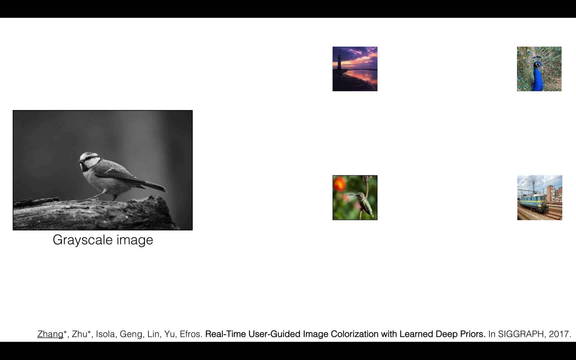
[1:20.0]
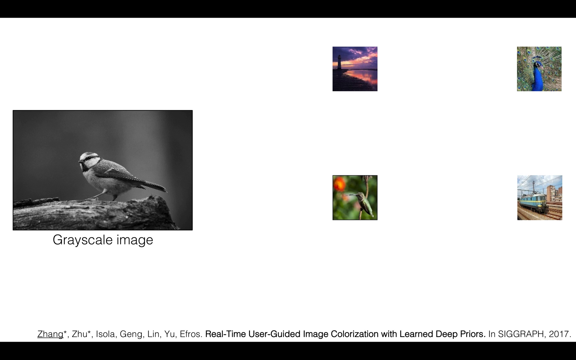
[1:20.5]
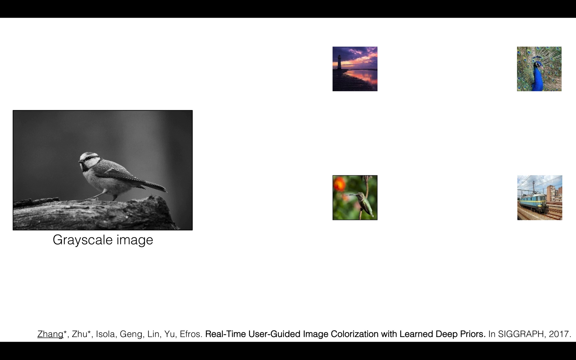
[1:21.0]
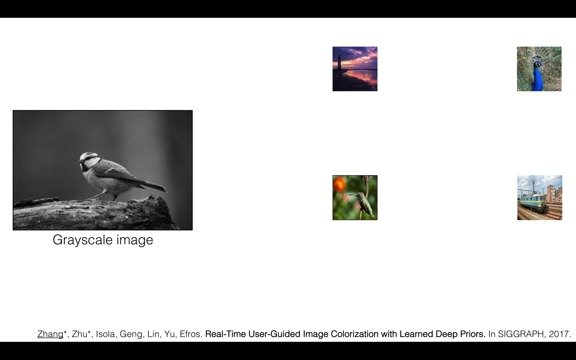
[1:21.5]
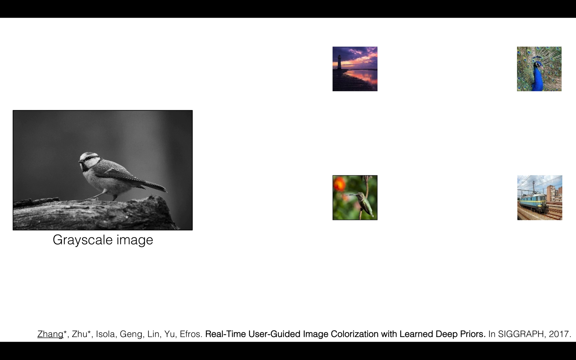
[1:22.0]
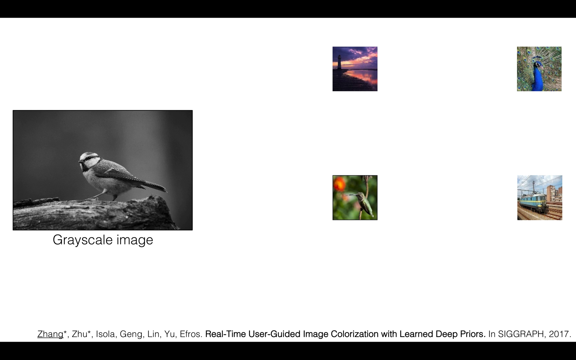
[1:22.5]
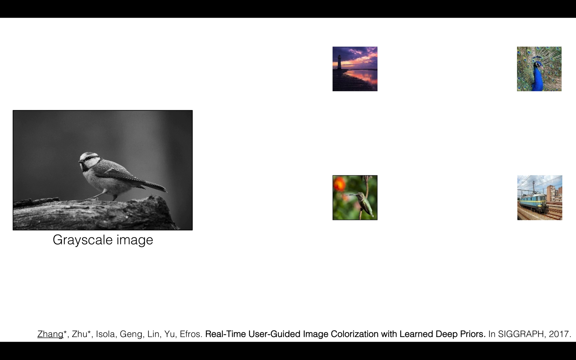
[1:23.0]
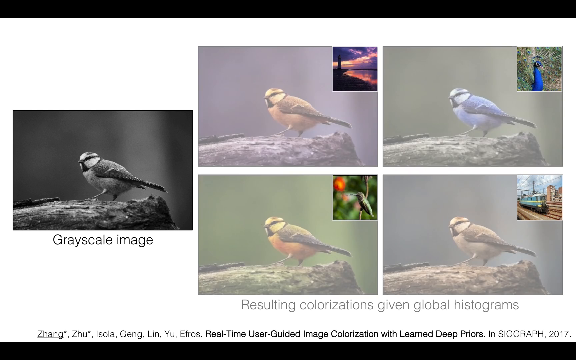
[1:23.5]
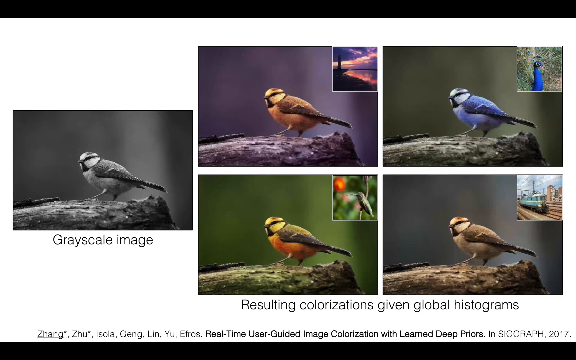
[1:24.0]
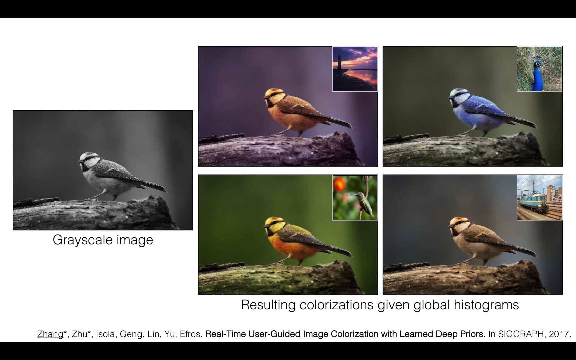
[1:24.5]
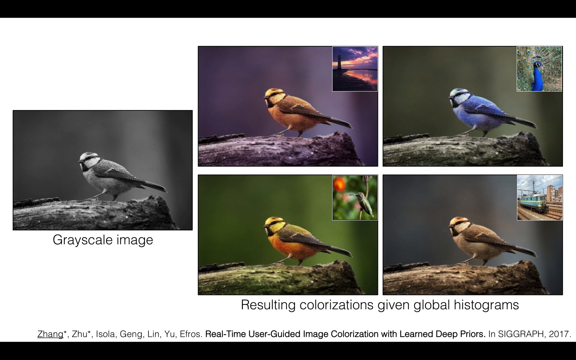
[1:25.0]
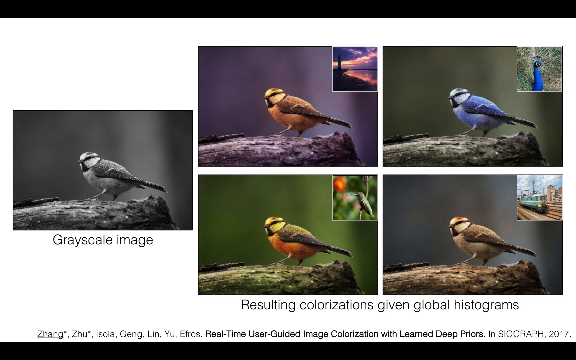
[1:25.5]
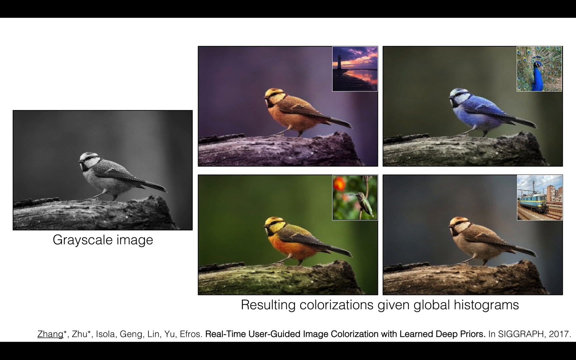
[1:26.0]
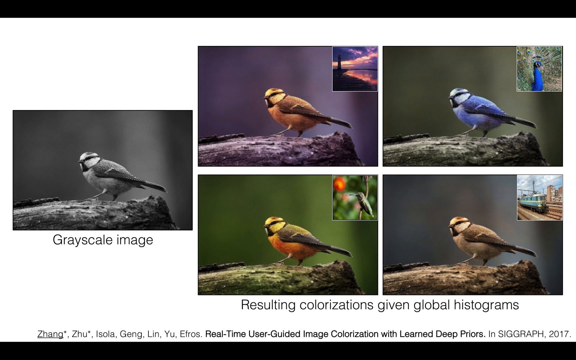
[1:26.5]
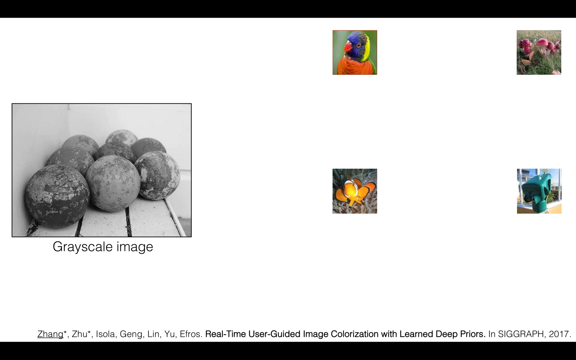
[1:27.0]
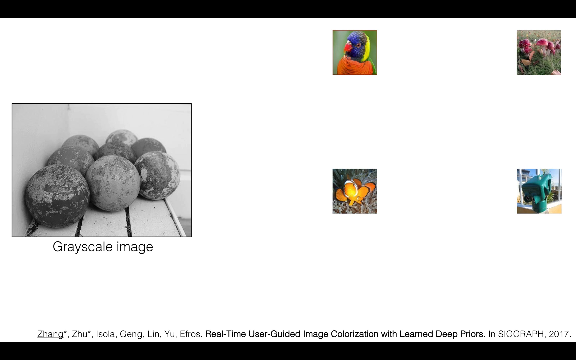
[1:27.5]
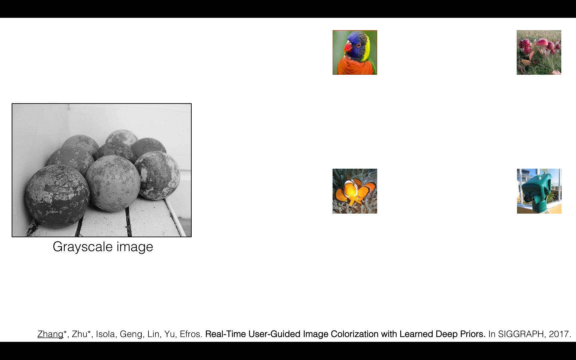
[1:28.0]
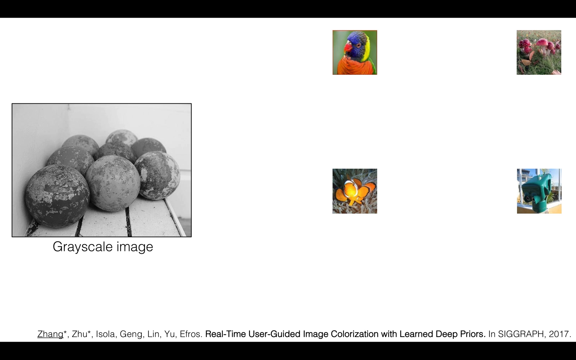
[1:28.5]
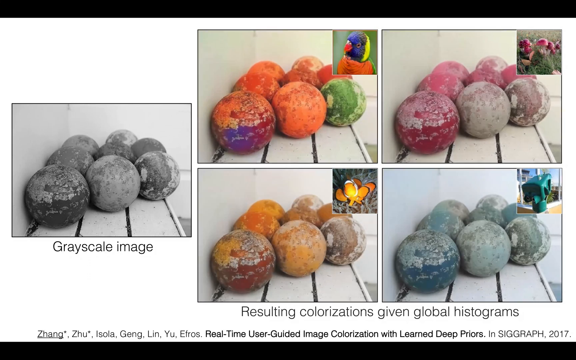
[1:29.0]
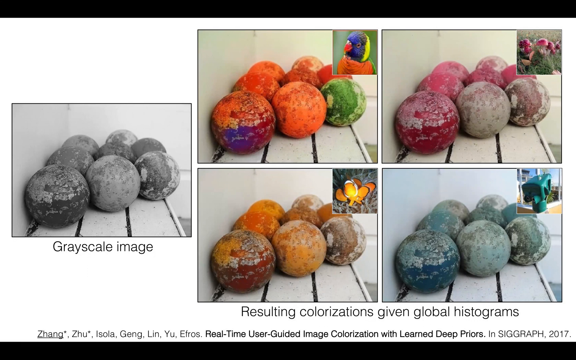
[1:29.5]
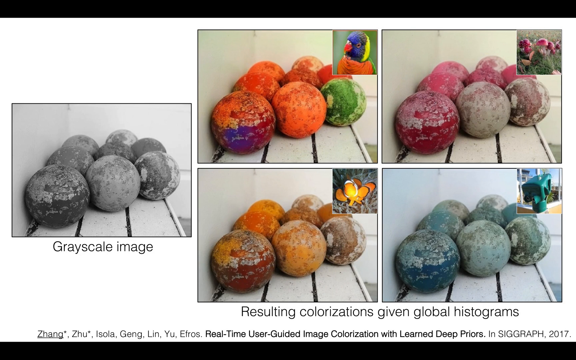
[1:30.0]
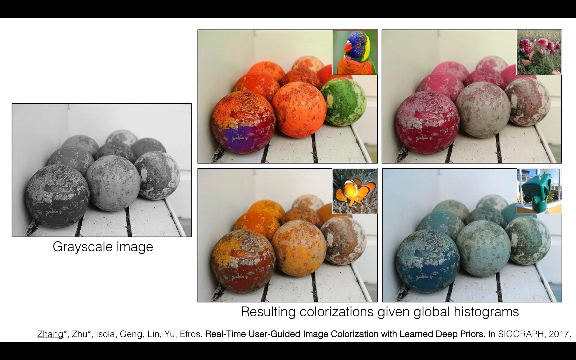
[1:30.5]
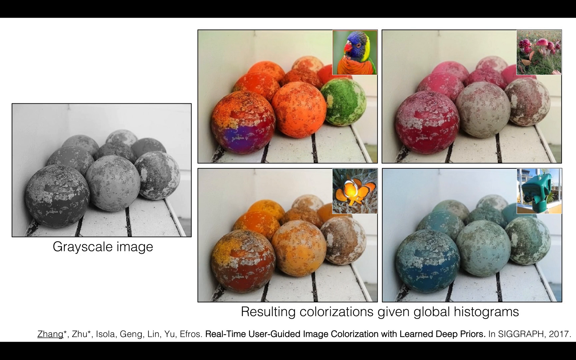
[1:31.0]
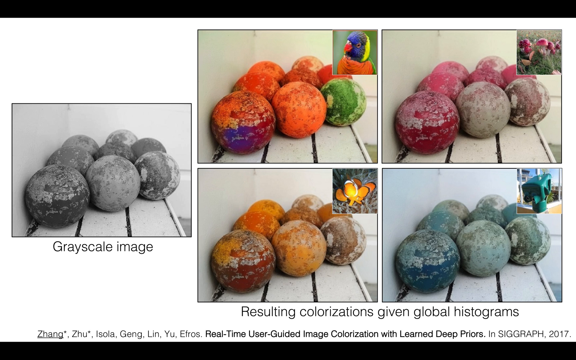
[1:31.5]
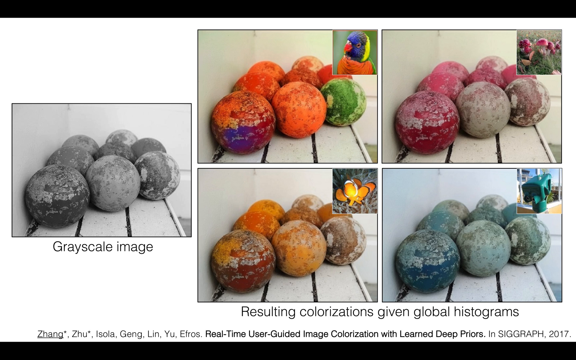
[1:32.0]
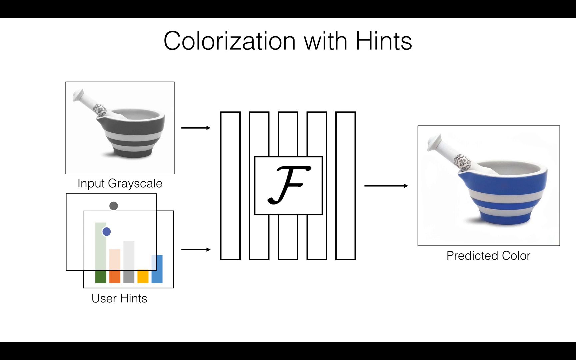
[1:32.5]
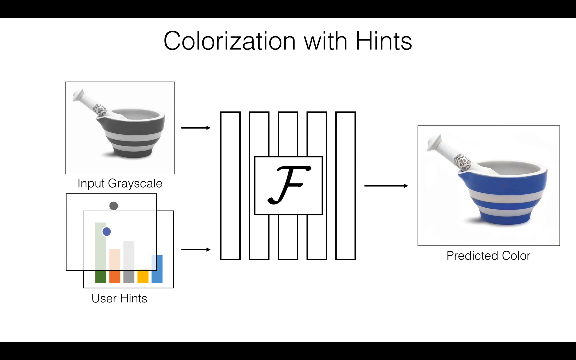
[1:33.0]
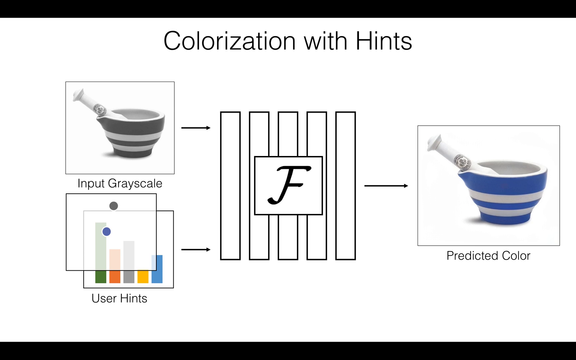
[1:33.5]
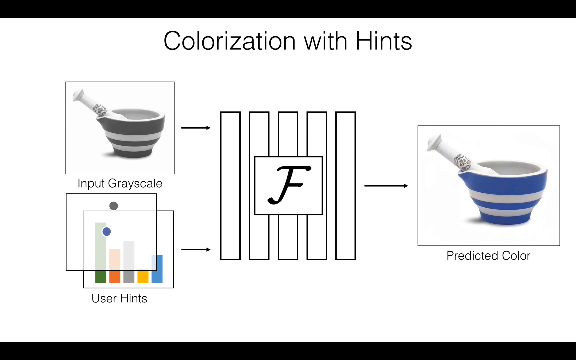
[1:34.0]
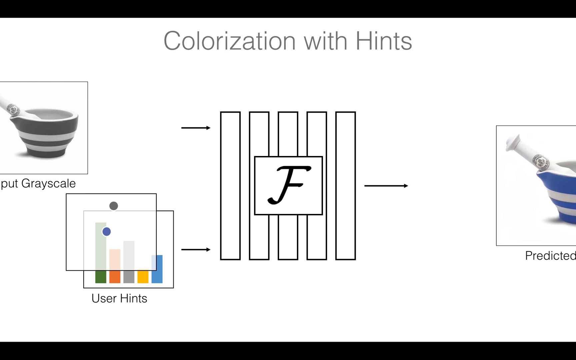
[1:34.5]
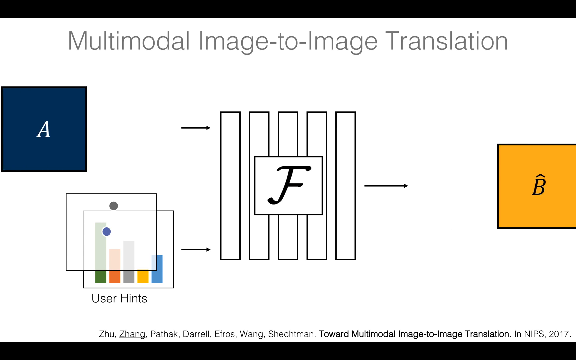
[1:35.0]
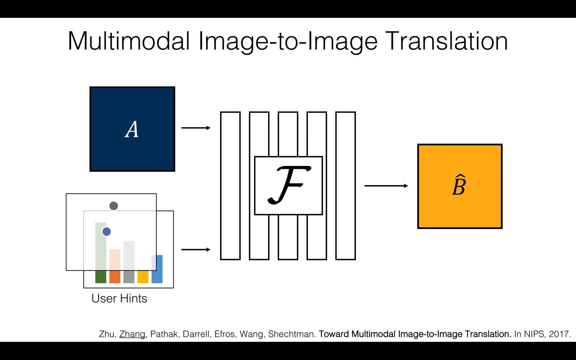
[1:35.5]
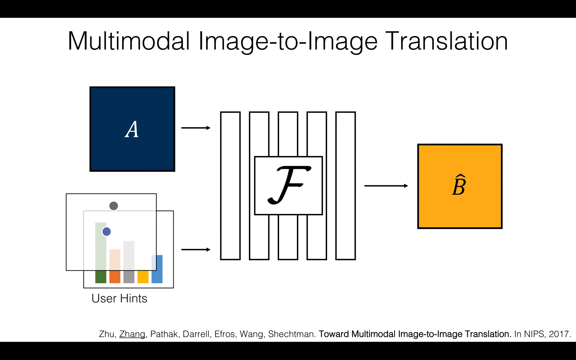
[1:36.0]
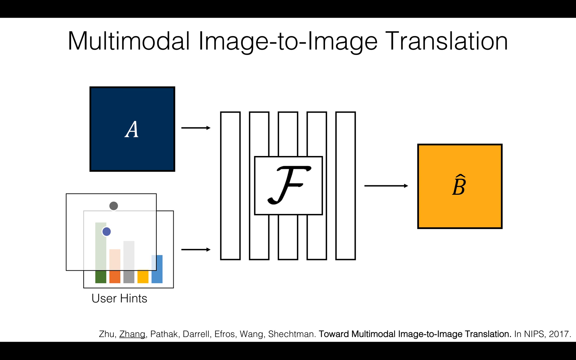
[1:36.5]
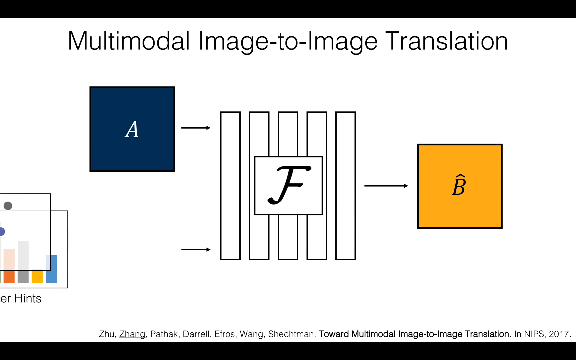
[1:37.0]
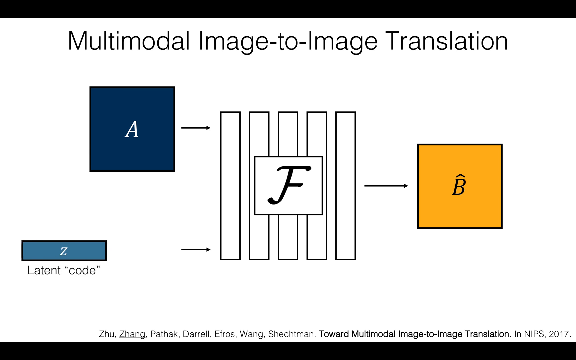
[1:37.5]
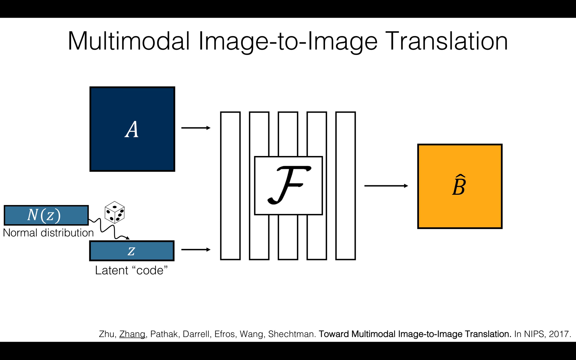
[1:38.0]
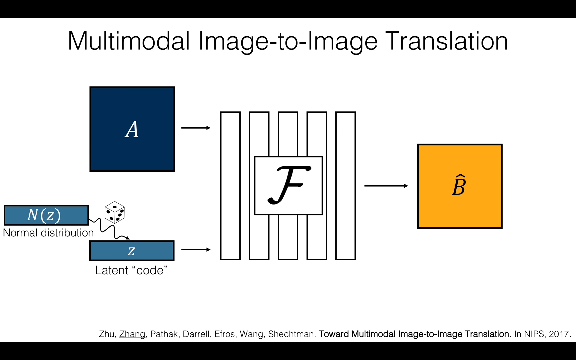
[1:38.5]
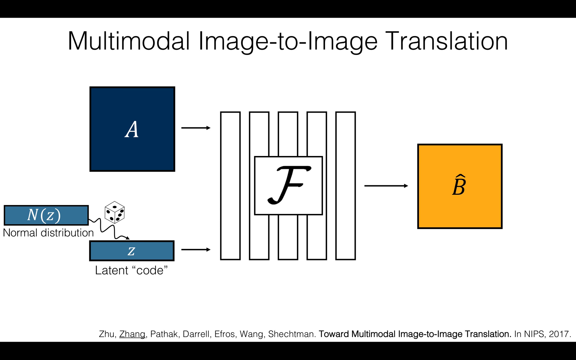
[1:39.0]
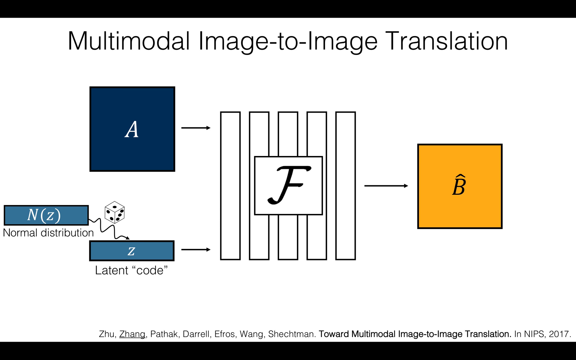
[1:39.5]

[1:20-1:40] Against a white background, a square box on the left contains a black-and-white photo of a bird looking to the left, apparently standing on a piece of wooden tree trunk, with a much darker wing on its left side. Beneath the image is the text "gray scale image." On the right are four small squares, each with a different colored image: the top left apparently a lighthouse, the top right a woman in a blue dress, the bottom left a very green bird, and the bottom right a train. The layout holds, and then versions of the same black-and-white bird appear near the pictures on the right in different colors. With the lighthouse image the bird takes on a very purplish orange hue; with the woman in the blue dress the bird is blue and white like her dress; with the green bird the bird is green in a very green scene; and with the train and railroad the bird is more brown. Underneath is the text "resulting colorizations given global histograms." This repeats with a bunch of little circular balls on the left, and larger squares on the right showing the balls in different colors with different images at the top right. Text at the top middle reads "multi-modal image to image translation."